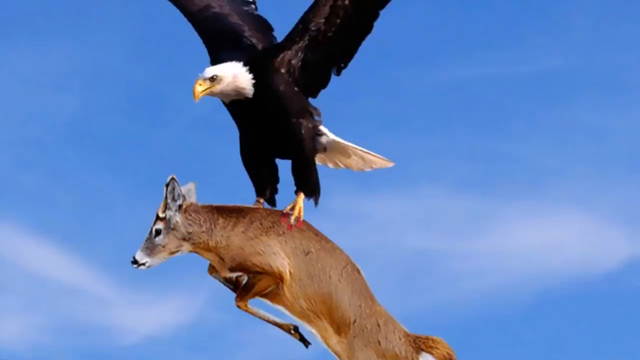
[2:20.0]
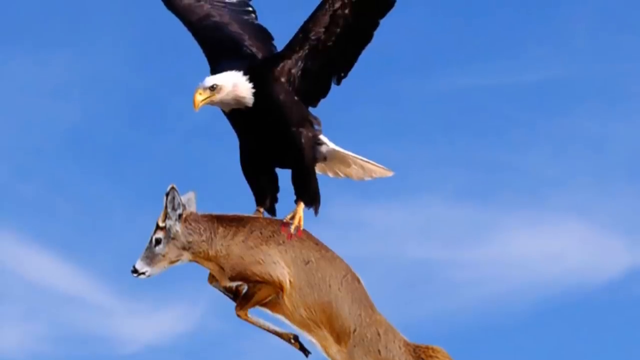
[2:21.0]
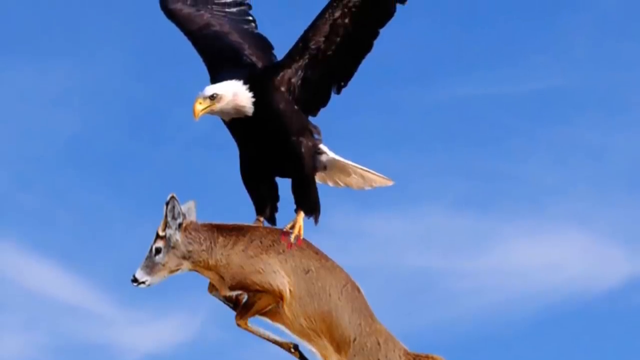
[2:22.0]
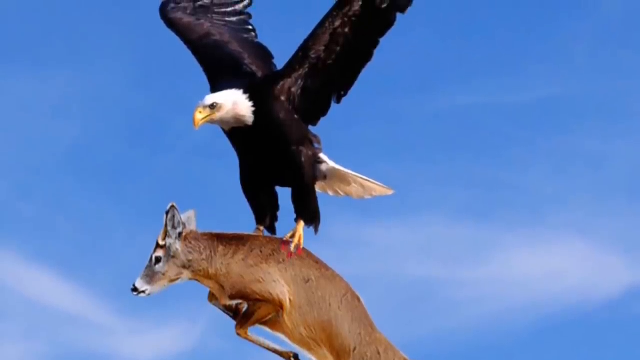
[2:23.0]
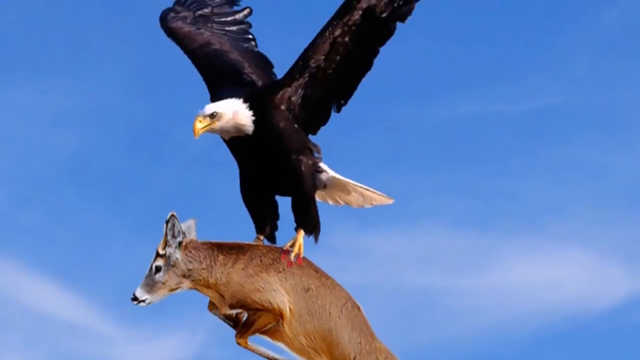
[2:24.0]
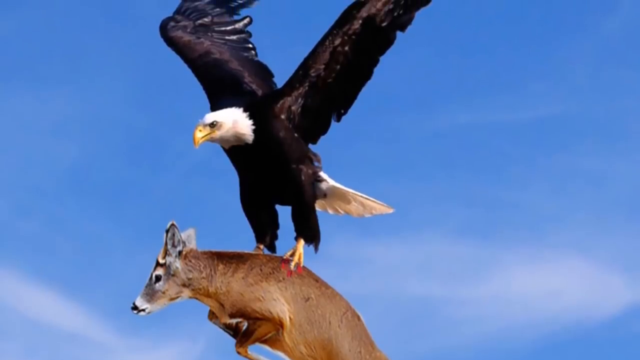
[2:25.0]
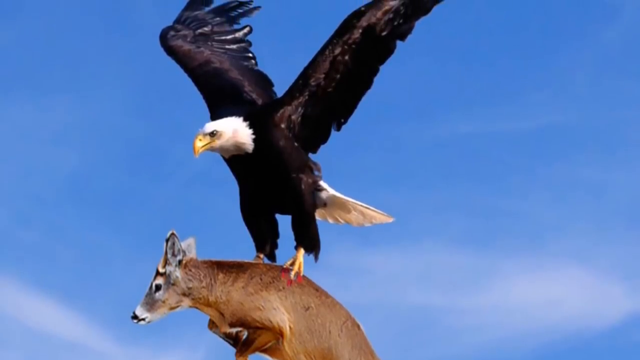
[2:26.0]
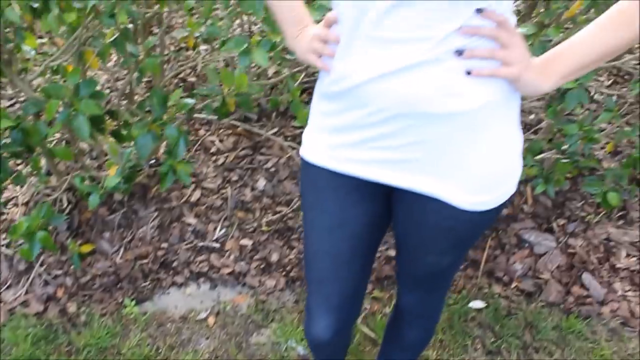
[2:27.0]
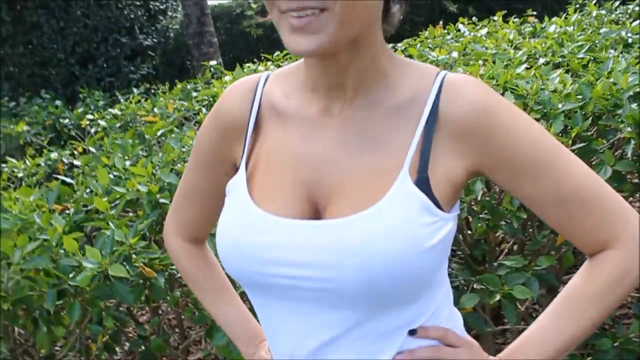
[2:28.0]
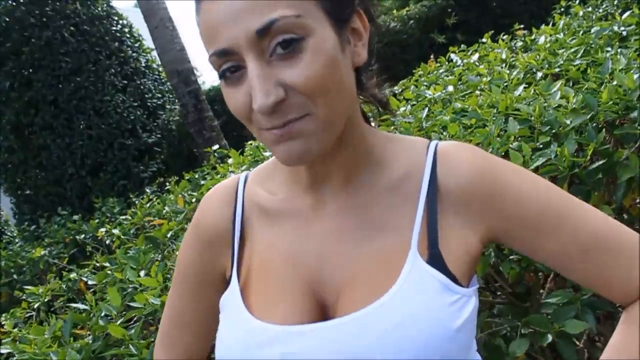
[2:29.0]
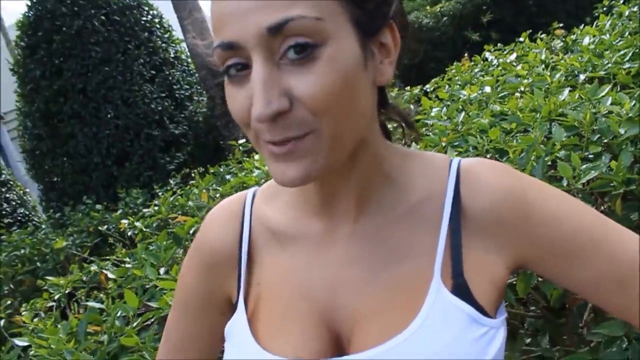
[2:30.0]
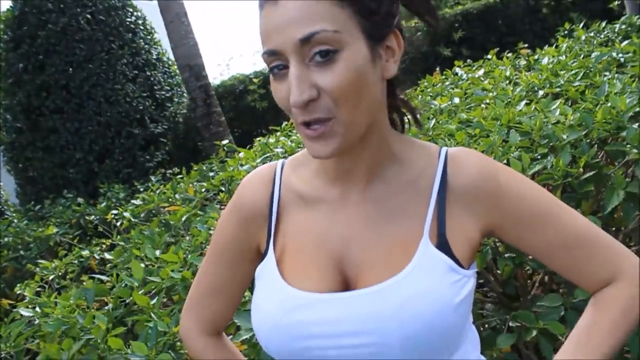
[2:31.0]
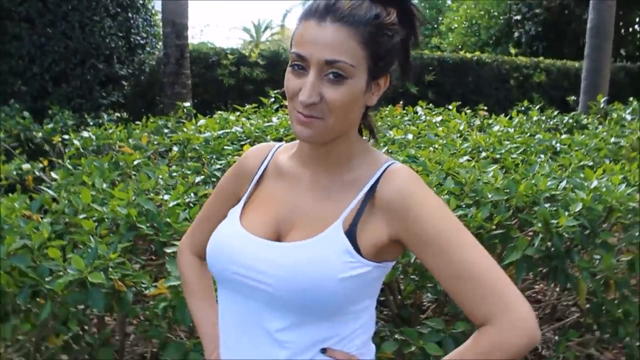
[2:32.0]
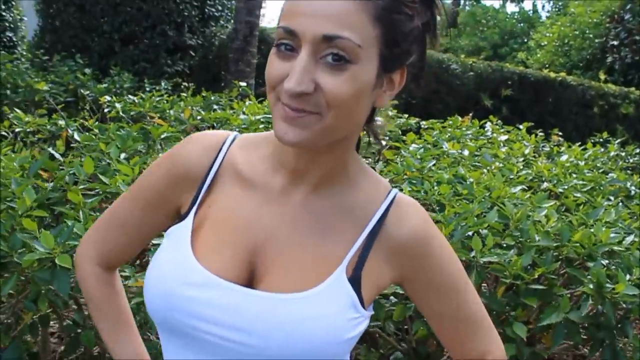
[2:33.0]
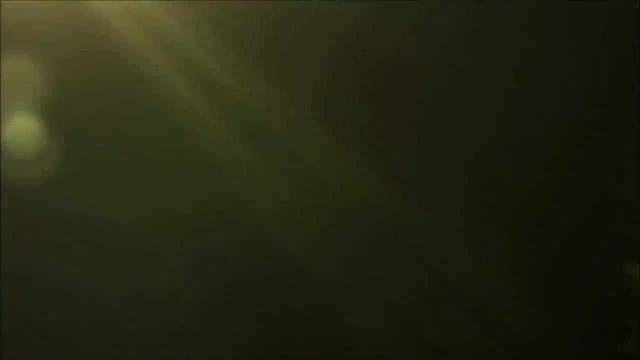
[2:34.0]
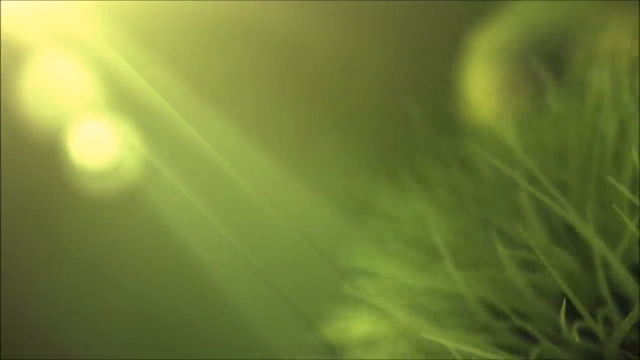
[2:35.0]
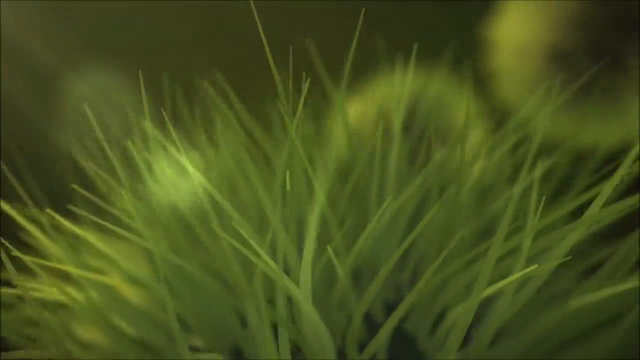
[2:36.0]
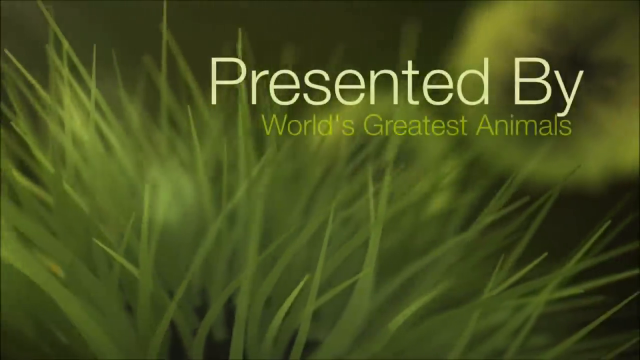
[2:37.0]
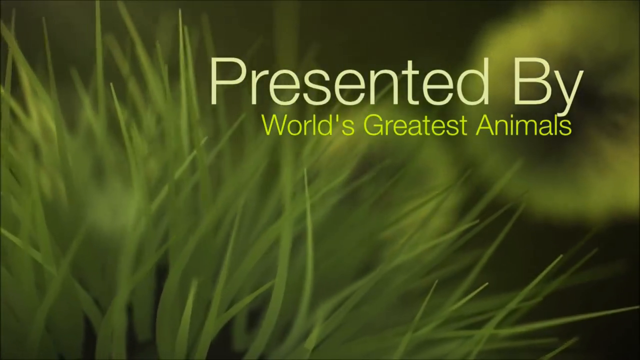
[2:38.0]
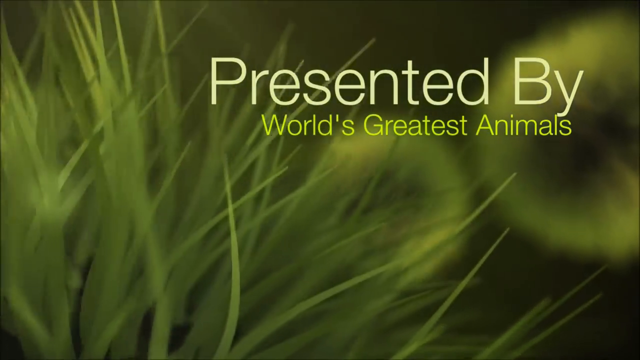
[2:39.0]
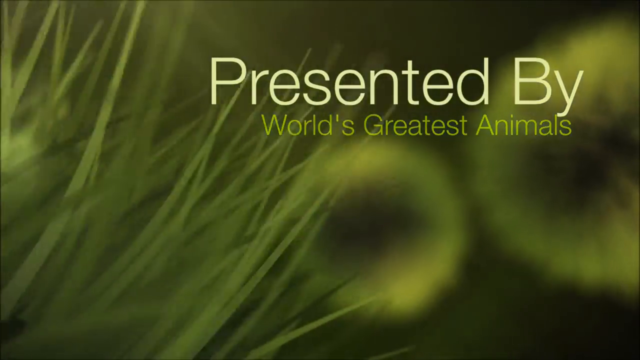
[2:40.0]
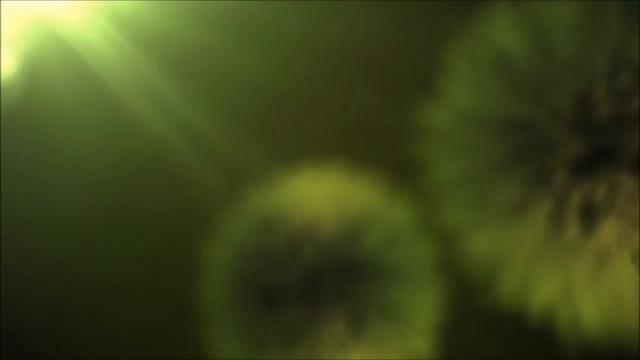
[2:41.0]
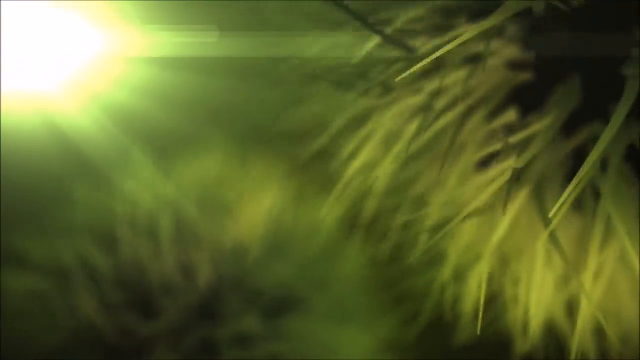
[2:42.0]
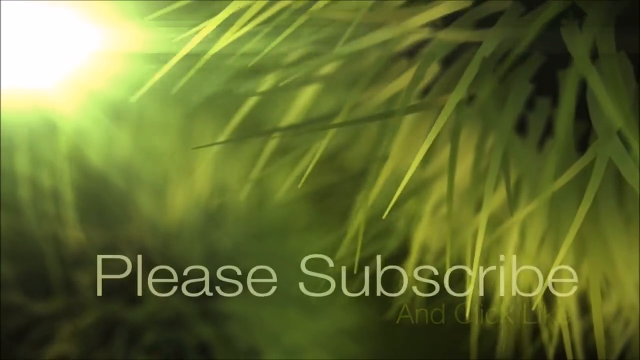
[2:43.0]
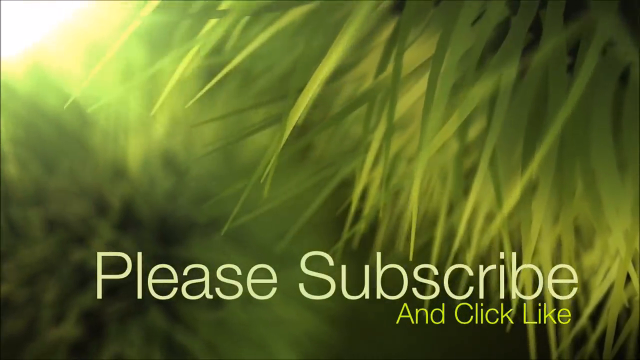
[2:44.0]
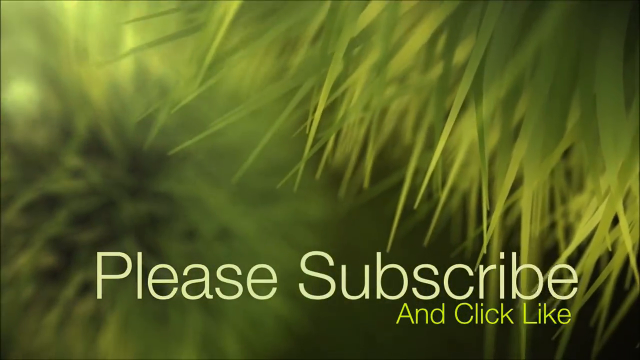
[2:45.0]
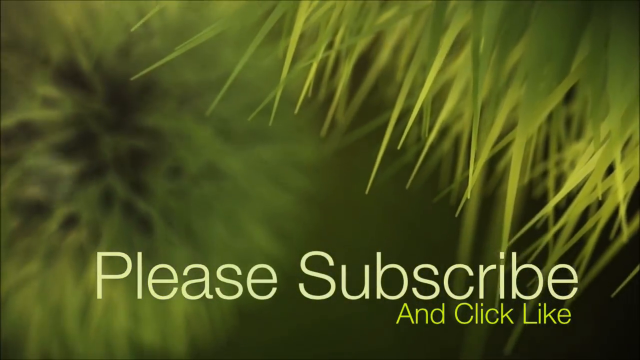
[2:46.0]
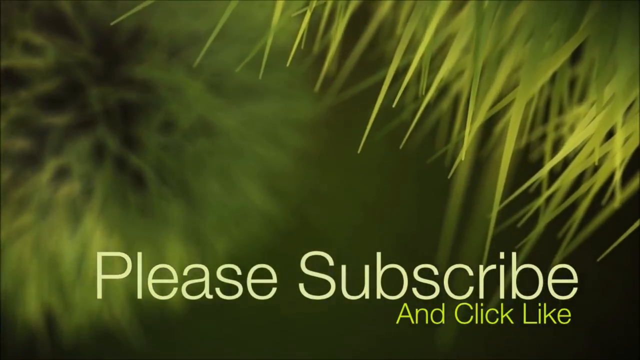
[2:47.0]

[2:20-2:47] The golden eagle holds a little animal in its claws, and its whole wingspan is seen with the wings spread out. A woman in a white tank top speaks to the camera. The screen turns black and a green light emerges; the camera slides across some grass, and the words "presented by world's greatest animal" appear in the top right corner. In the background are little tufts of grass that look almost like dandelions made of grass, and text reads "please subscribe and click like".